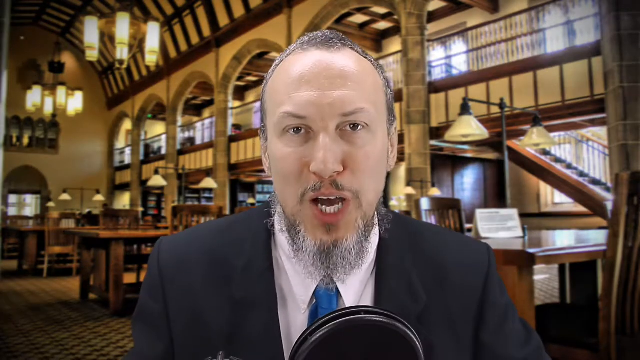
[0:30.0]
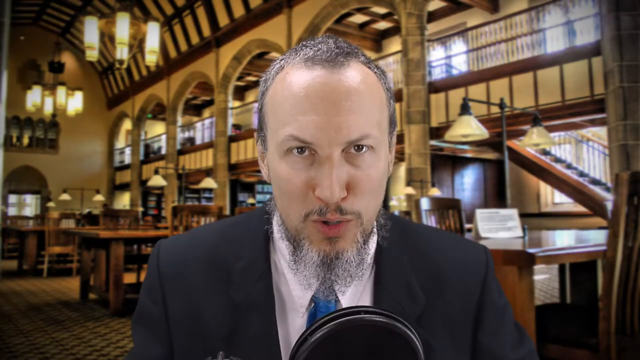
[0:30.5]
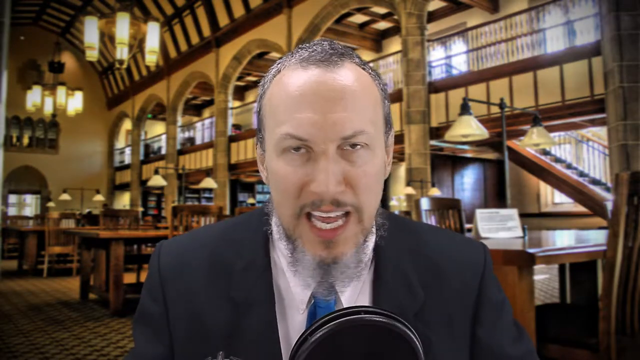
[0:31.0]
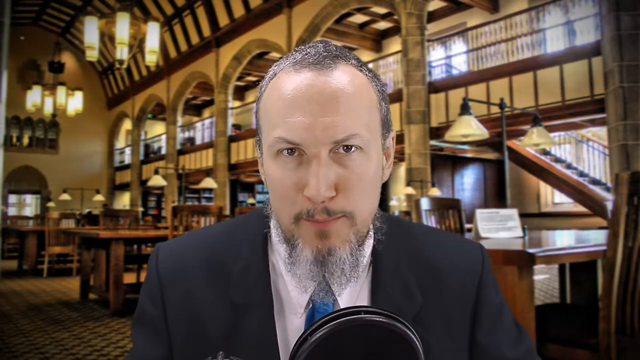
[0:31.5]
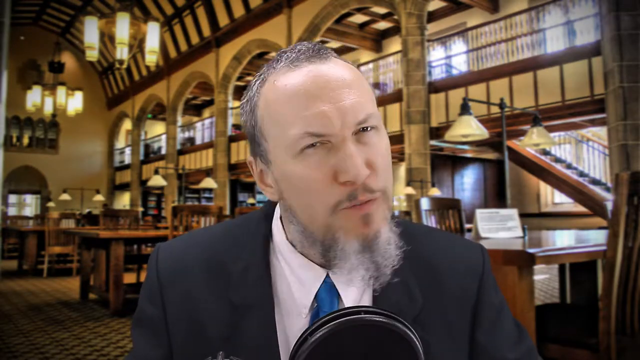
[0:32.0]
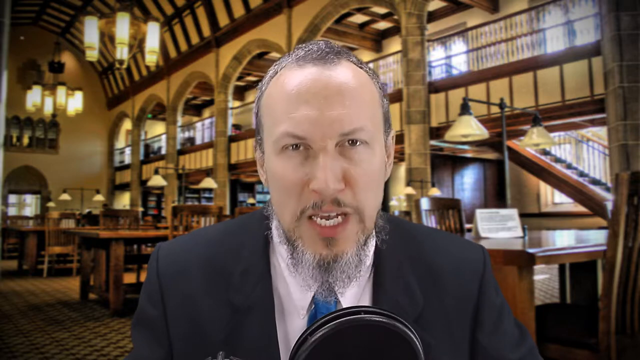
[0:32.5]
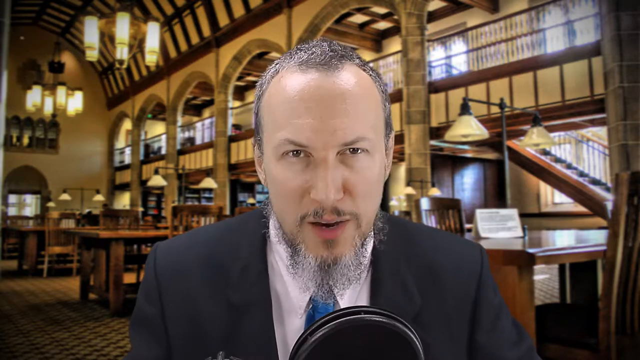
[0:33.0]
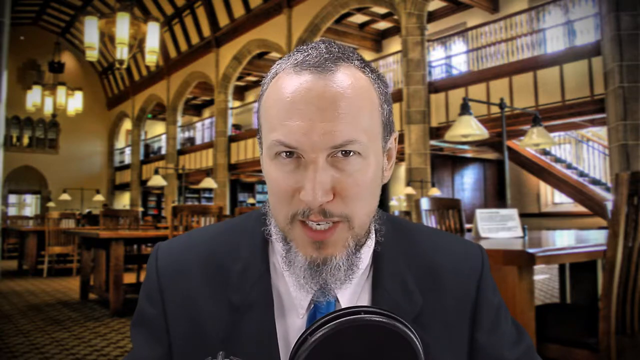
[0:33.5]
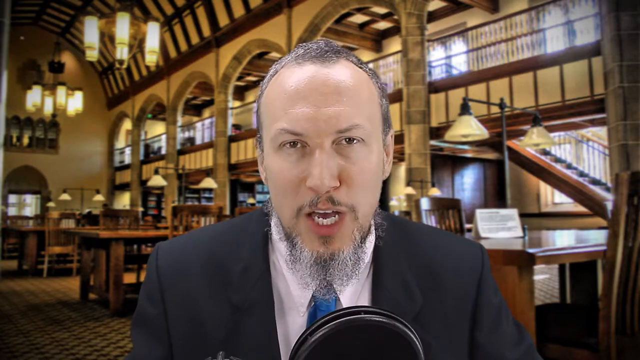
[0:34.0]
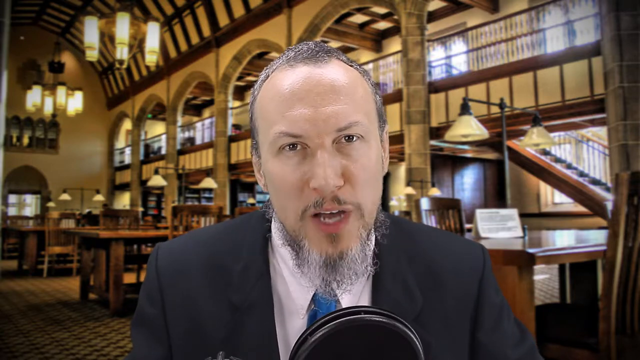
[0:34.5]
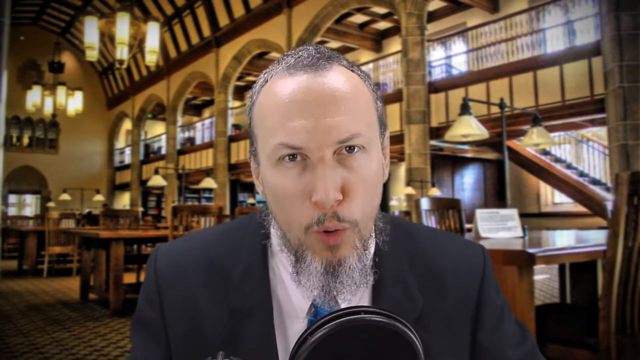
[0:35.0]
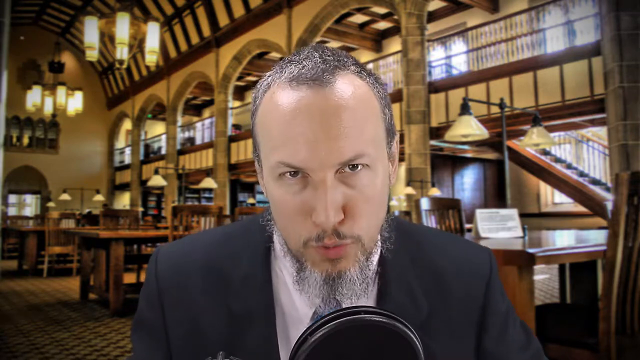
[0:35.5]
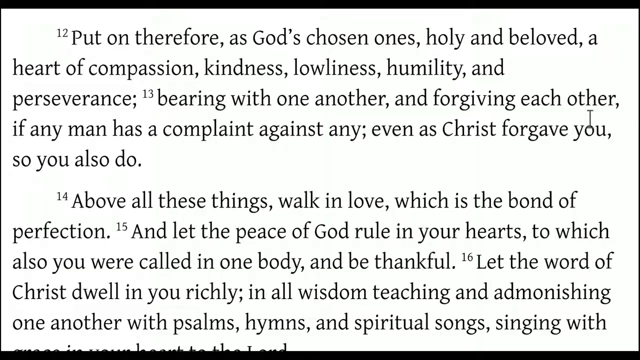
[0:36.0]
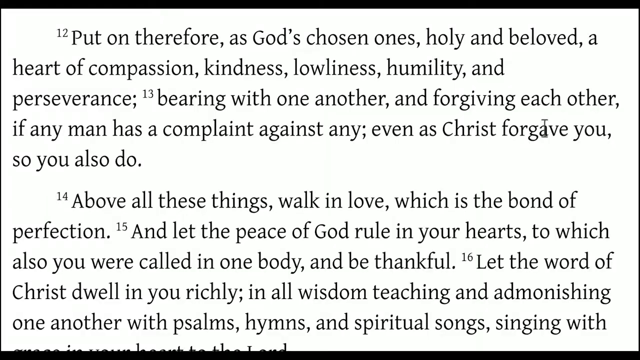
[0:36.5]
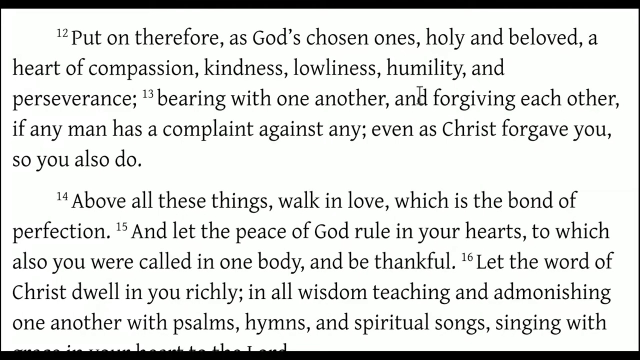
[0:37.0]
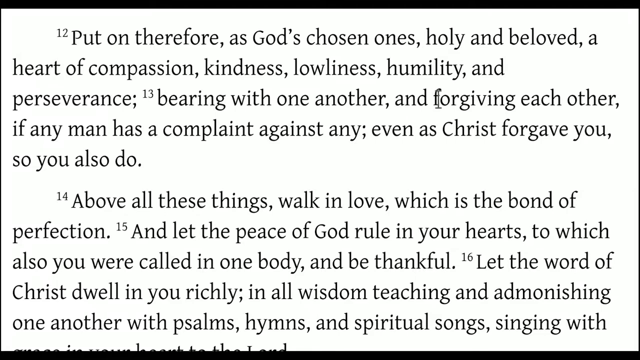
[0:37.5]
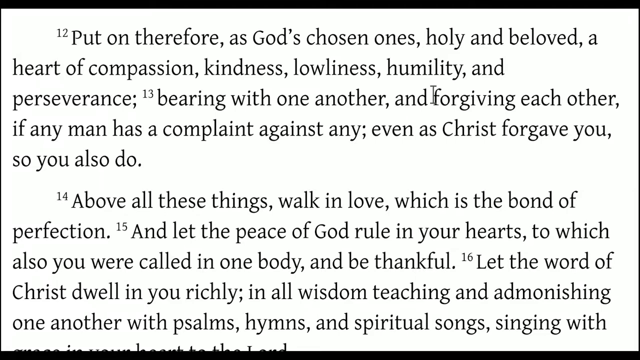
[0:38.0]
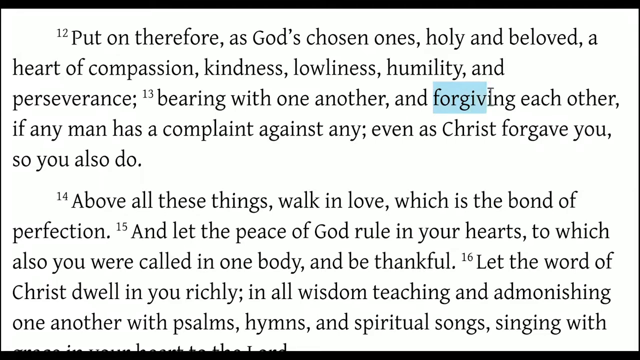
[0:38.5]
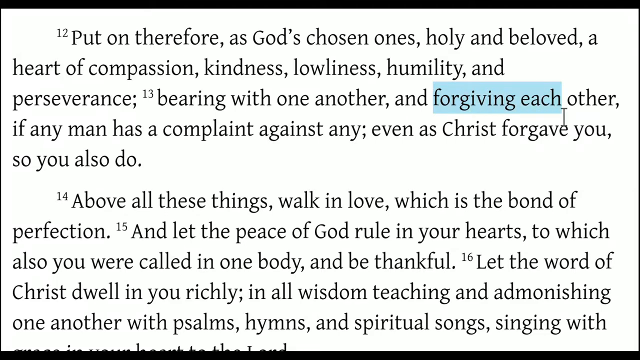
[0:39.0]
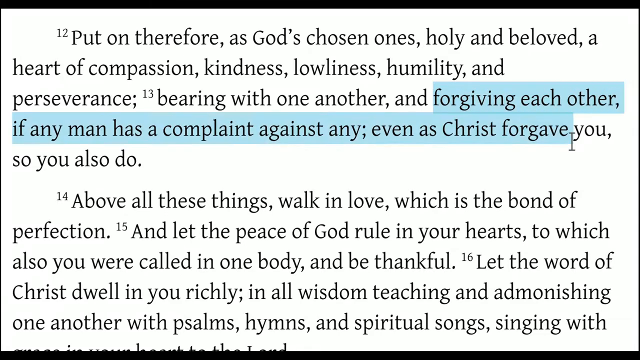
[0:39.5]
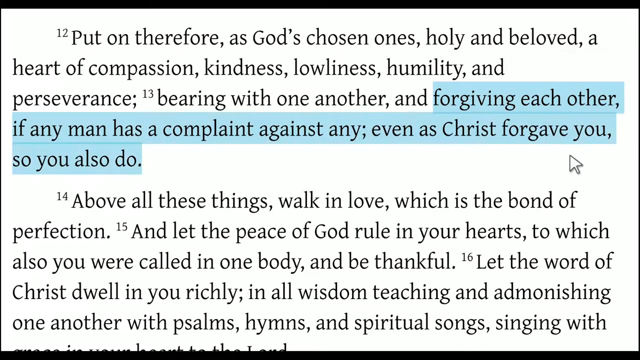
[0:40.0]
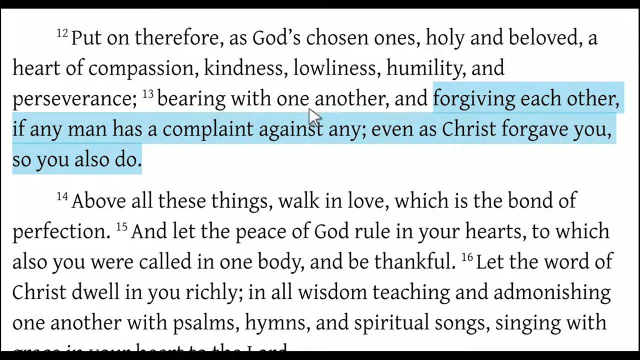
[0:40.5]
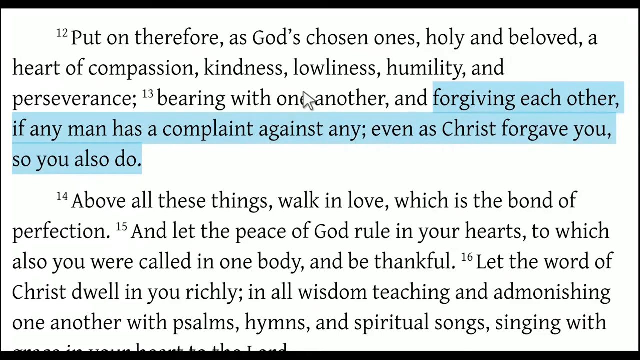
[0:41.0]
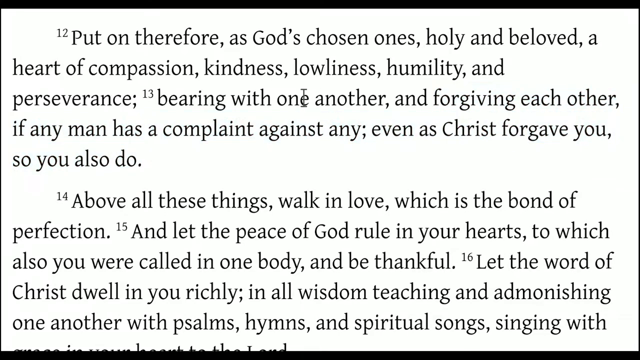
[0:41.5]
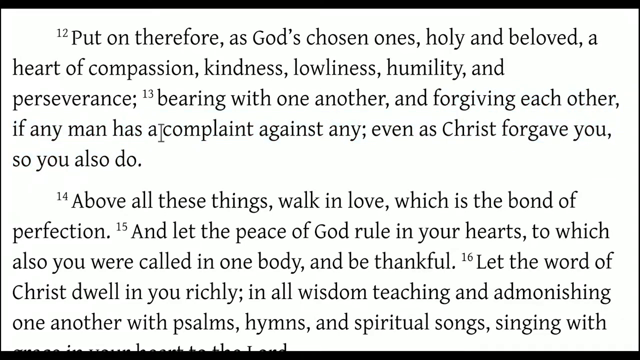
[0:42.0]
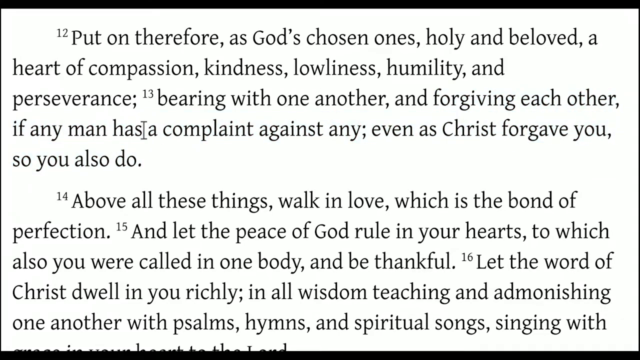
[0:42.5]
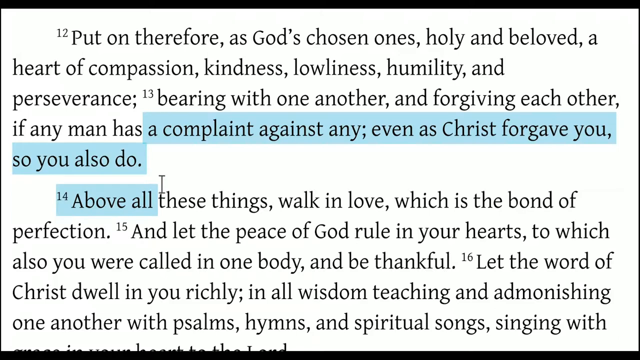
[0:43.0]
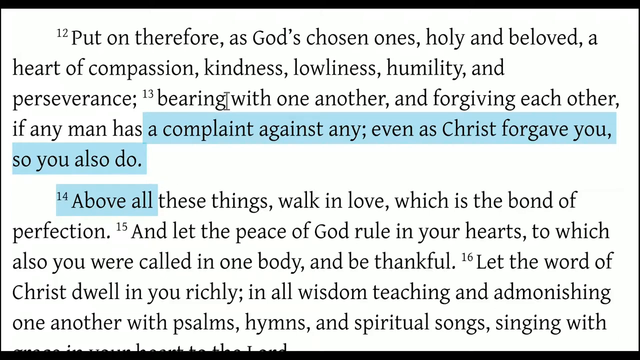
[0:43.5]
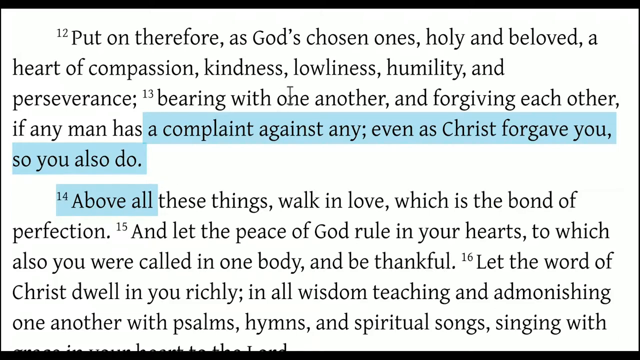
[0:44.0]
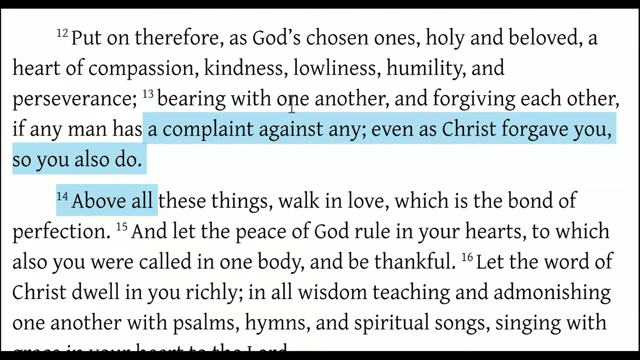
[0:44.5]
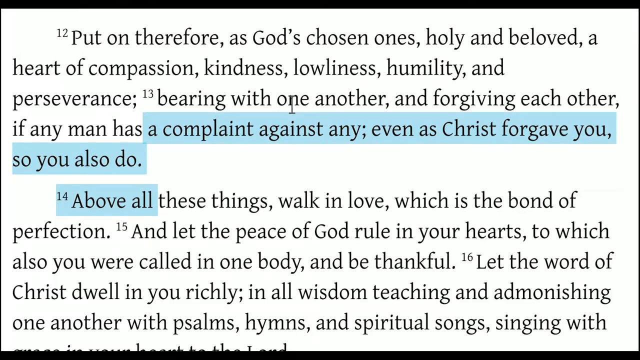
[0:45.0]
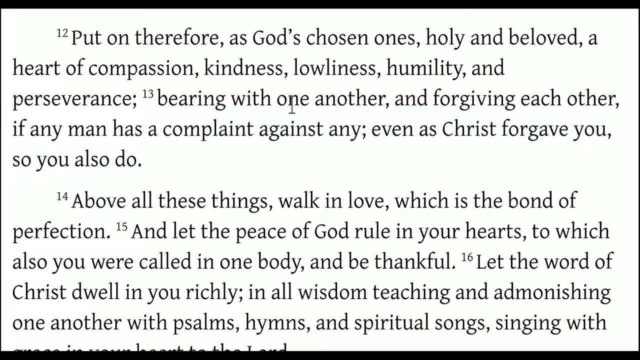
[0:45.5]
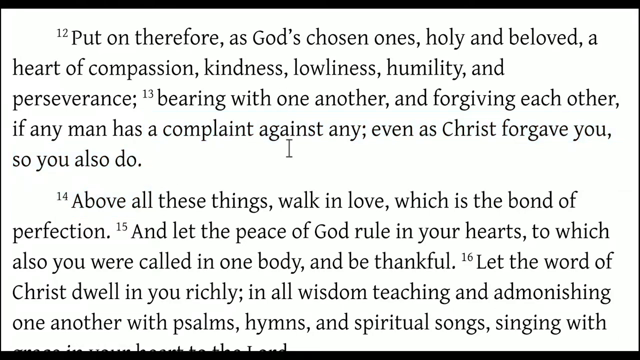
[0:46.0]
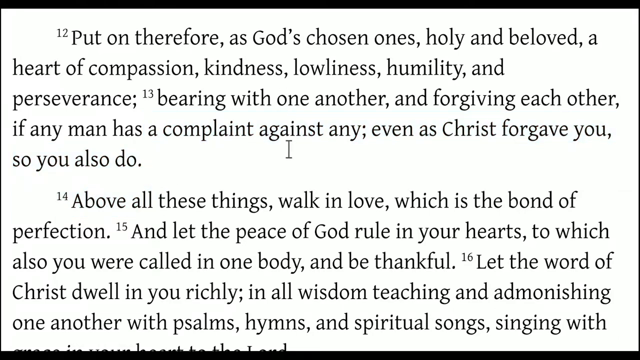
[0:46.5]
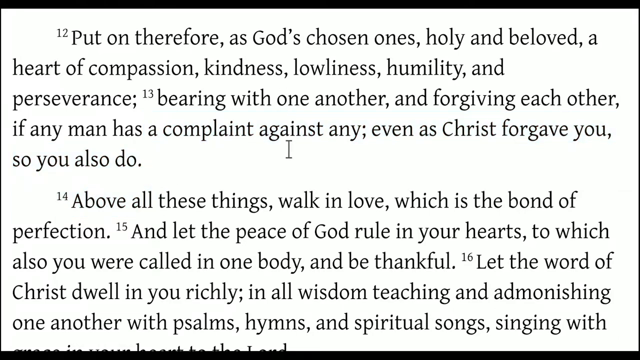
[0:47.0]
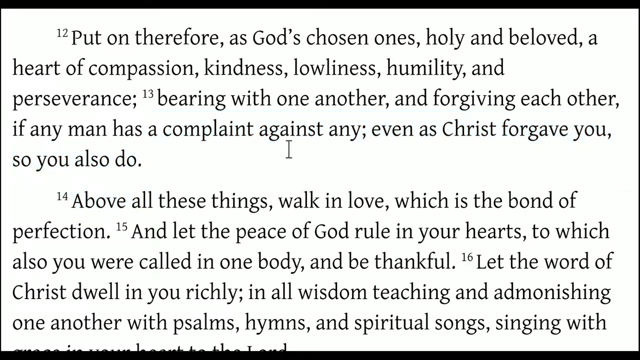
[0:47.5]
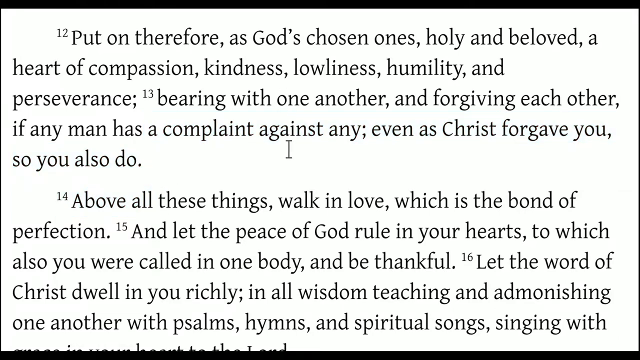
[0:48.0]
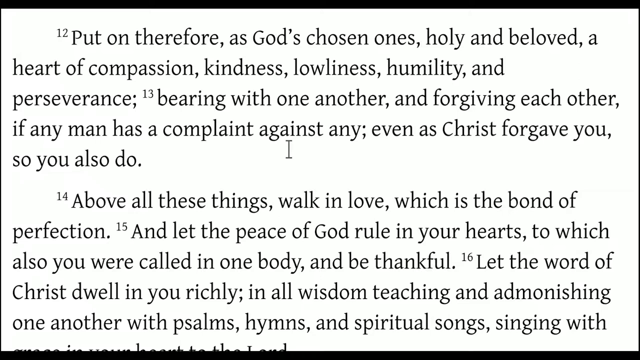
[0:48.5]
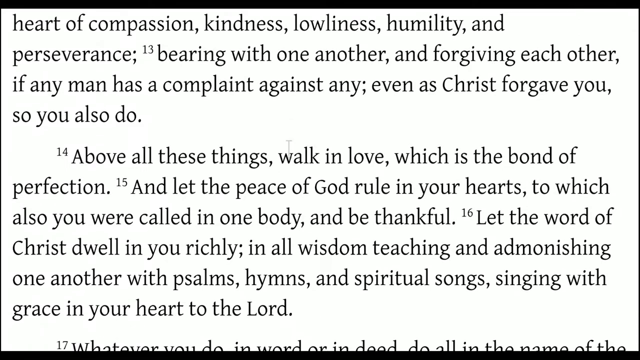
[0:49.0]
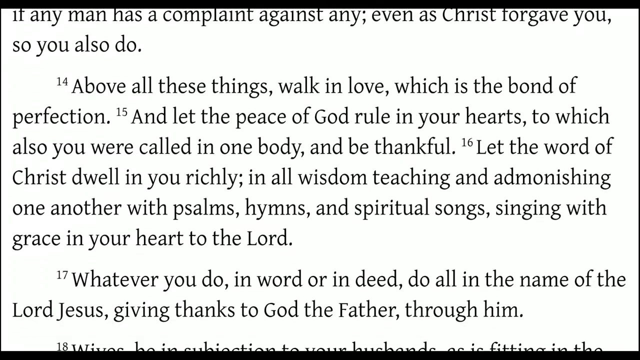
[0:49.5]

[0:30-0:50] The young man with short hair, a graying beard and goatee, and a thin mustache appears on screen in his dark-colored suit with a white shirt and a blue tie. He nods his head in a disagreeing manner and squints his eyes. He then shows the page from the Bible again, which reads "put on therefore as God's chosen ones holy and beloved a heart of compassion kindness lowliness humility and perseverance bearing with one another forgiving each other if any man has a complaint against any even as Christ forgave you so you also forgive him." He highlights this last sentence.